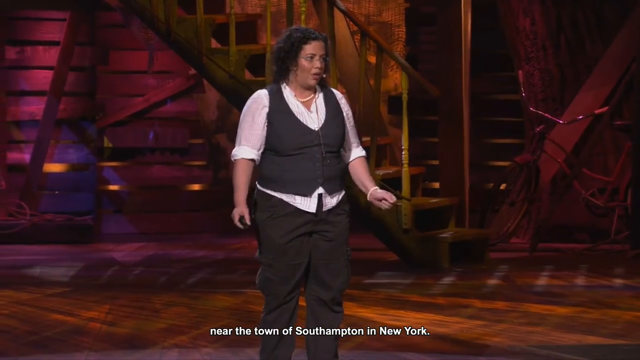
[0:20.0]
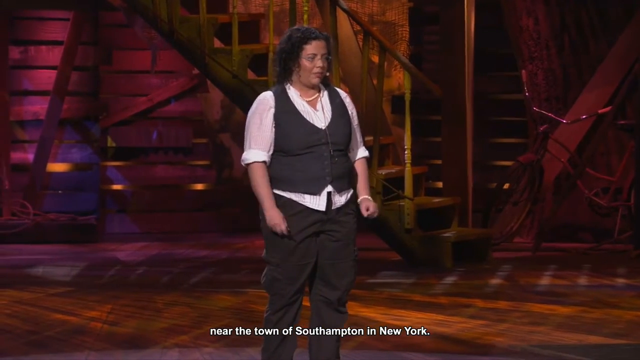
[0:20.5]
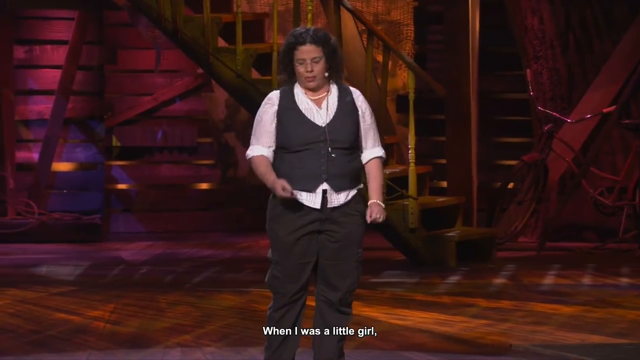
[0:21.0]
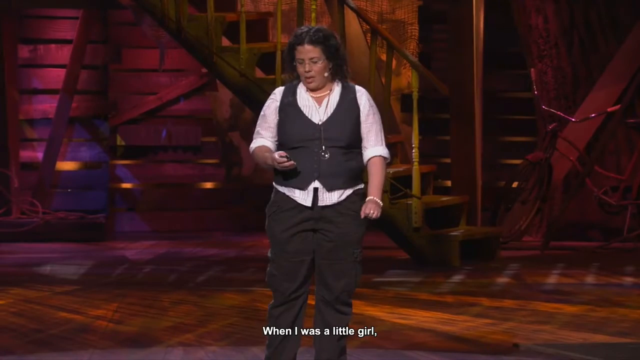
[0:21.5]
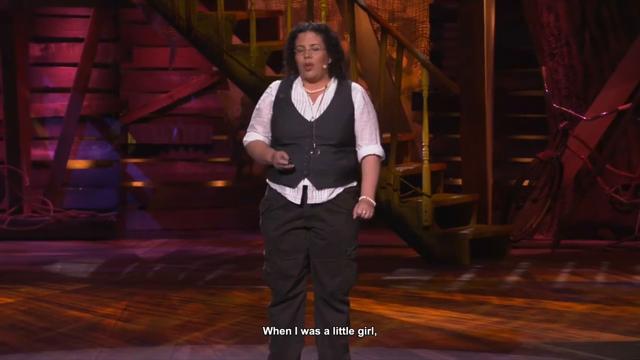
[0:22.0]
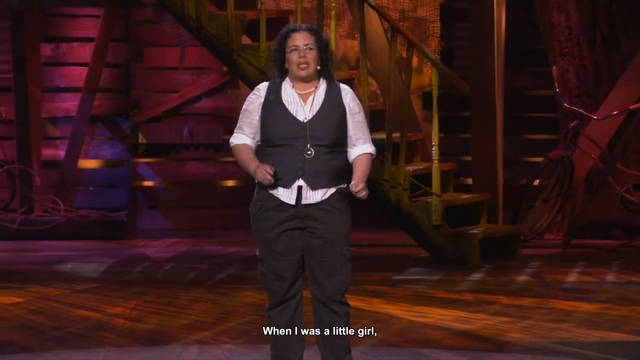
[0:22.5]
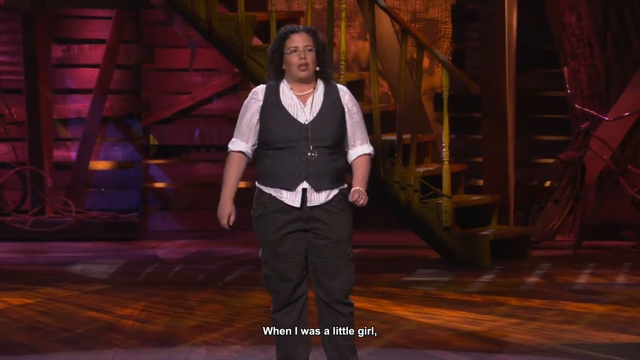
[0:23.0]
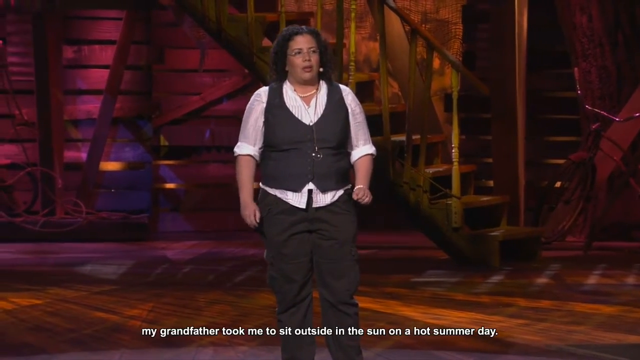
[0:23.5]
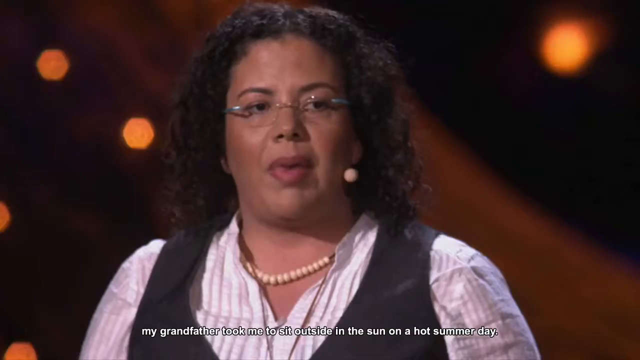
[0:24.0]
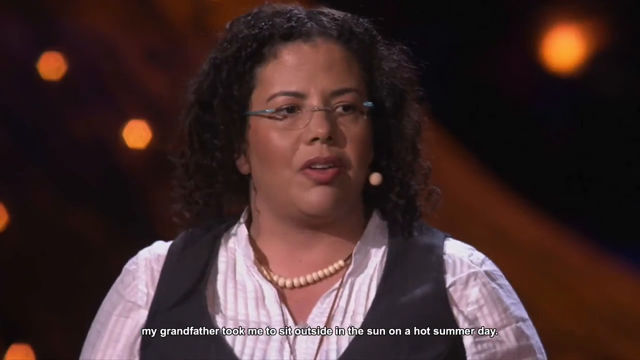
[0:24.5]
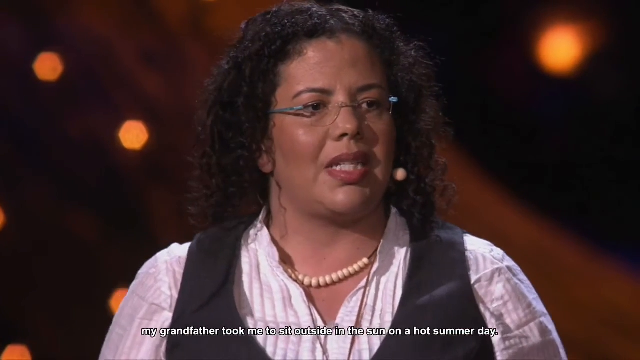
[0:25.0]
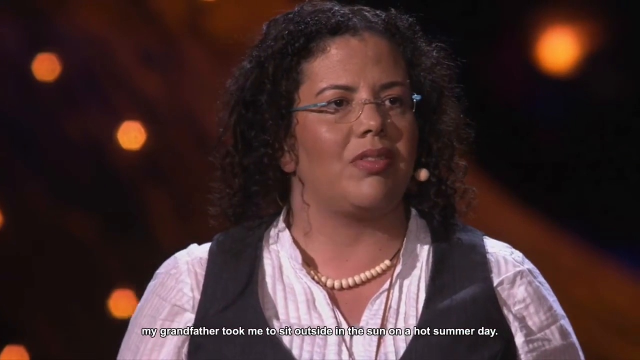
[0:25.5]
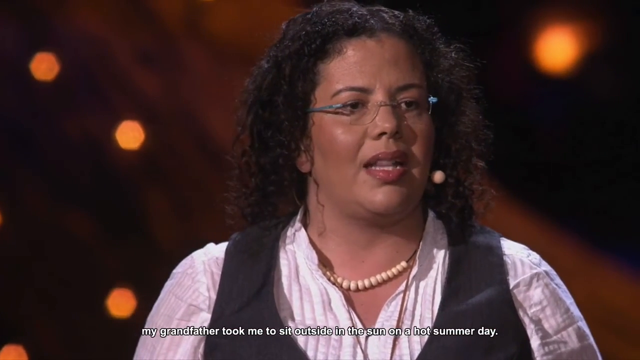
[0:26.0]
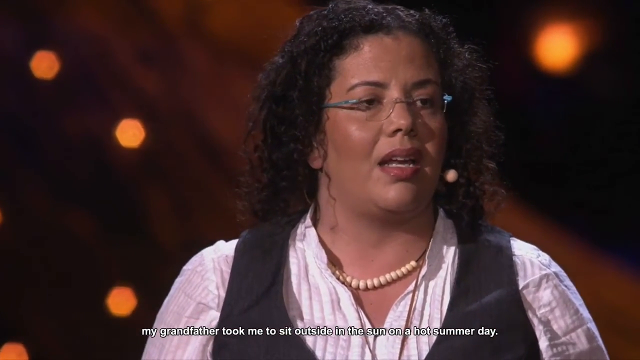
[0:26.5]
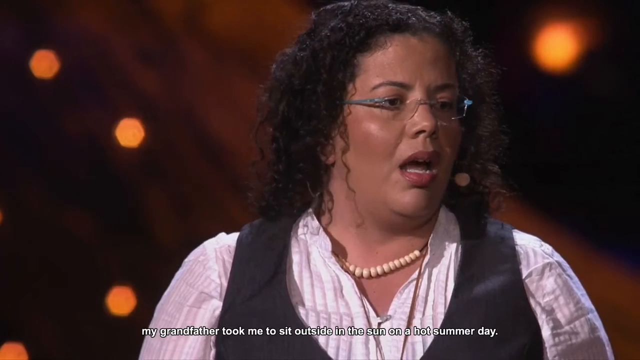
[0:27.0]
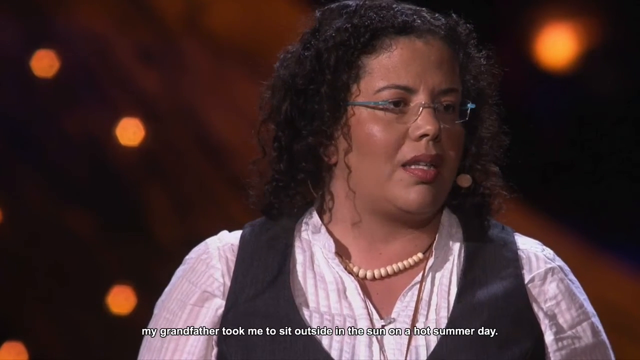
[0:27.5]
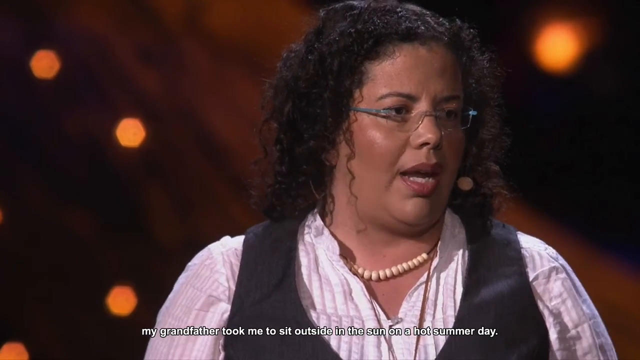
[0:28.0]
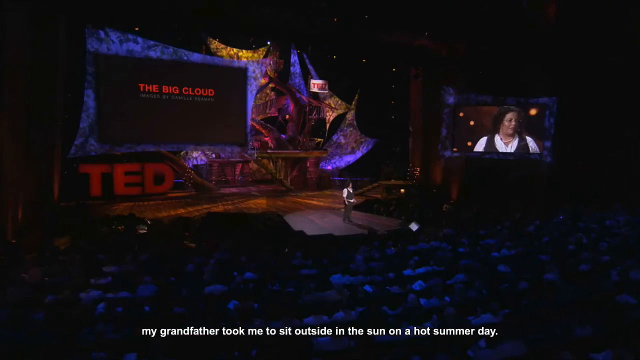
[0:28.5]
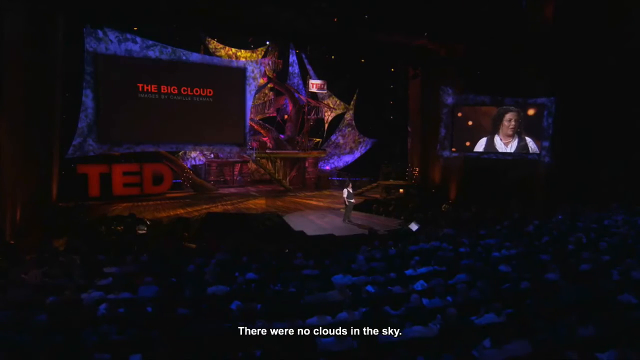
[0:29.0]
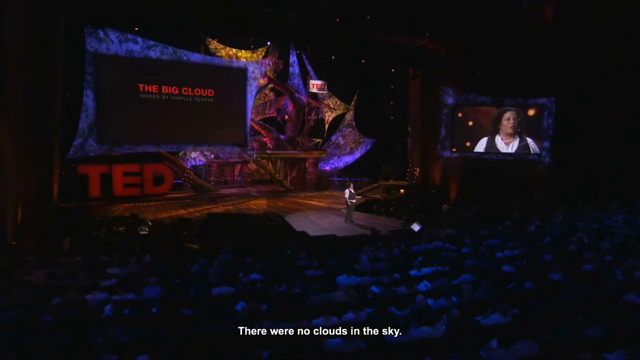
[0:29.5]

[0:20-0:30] A wider shot shows her standing on stage. Behind her is a staircase leading up, with a bicycle next to it. The stage colors are magenta and pink with some orange, and a normal white light highlights her. She stands on the stage addressing the audience. The camera zooms in to a close-up as she speaks, looking a bit to her left. The camera then zooms out to show the full stage: a giant red TED logo is on the left-hand side of the stage, a giant screen is on the stage directly behind her, and to her right, off the stage, a big screen relays the view to the audience.